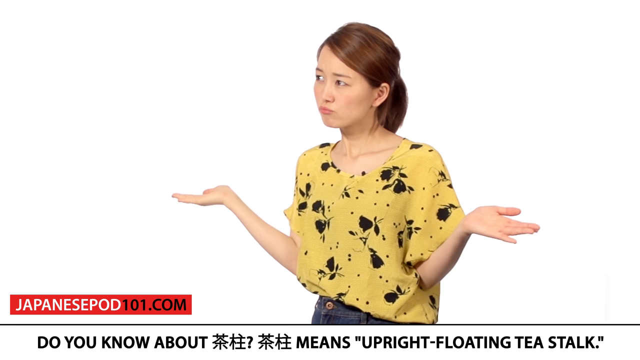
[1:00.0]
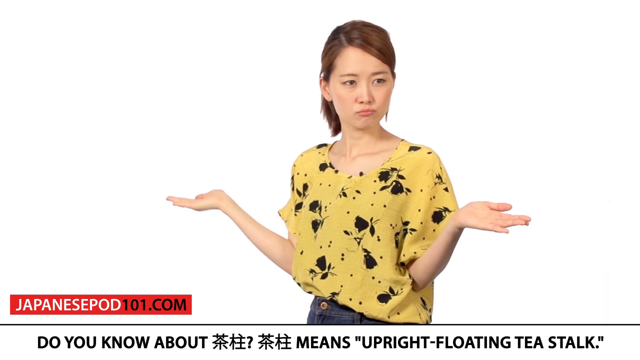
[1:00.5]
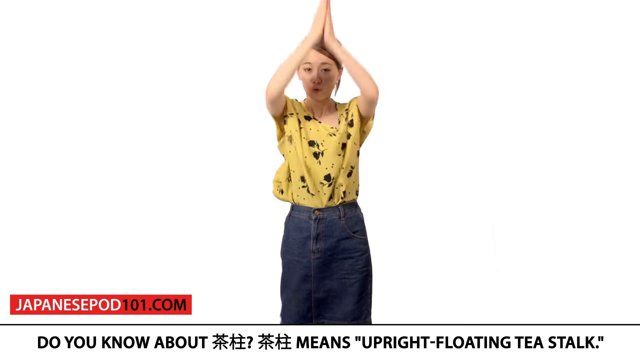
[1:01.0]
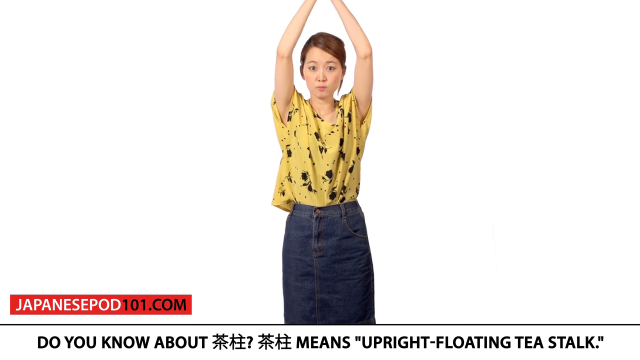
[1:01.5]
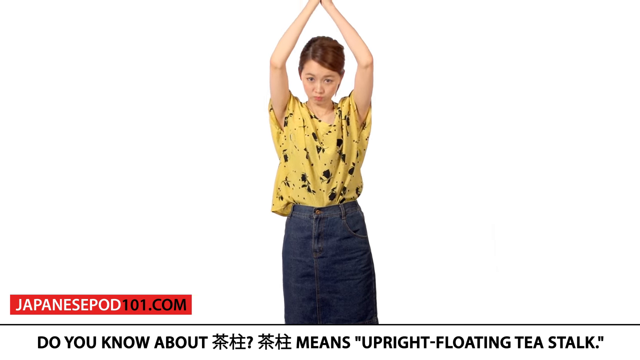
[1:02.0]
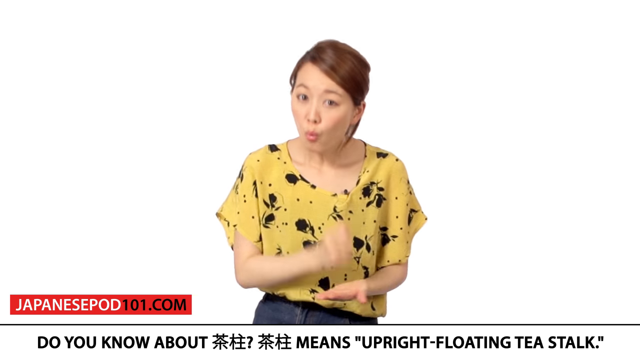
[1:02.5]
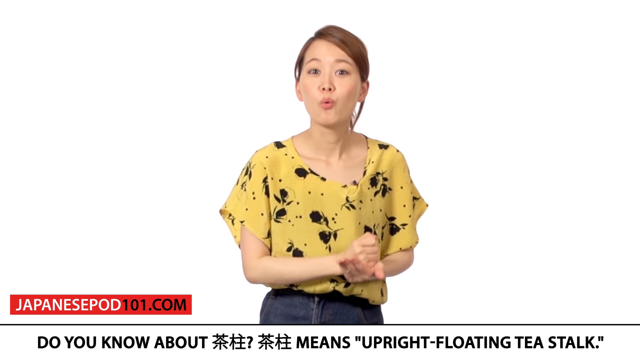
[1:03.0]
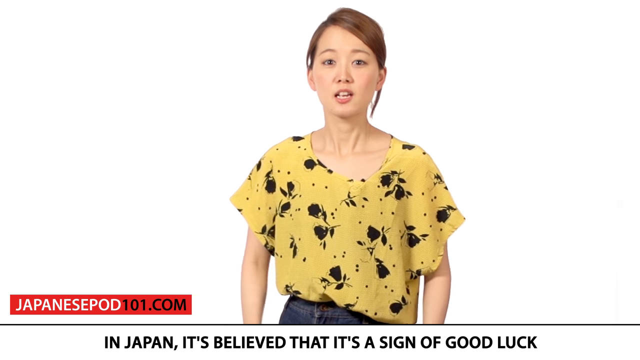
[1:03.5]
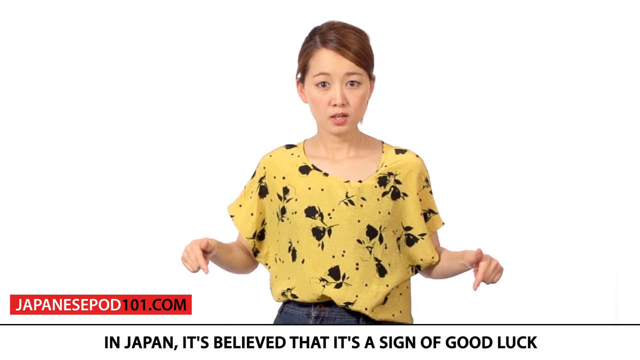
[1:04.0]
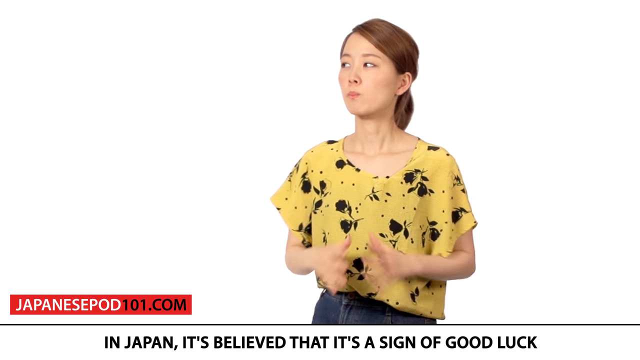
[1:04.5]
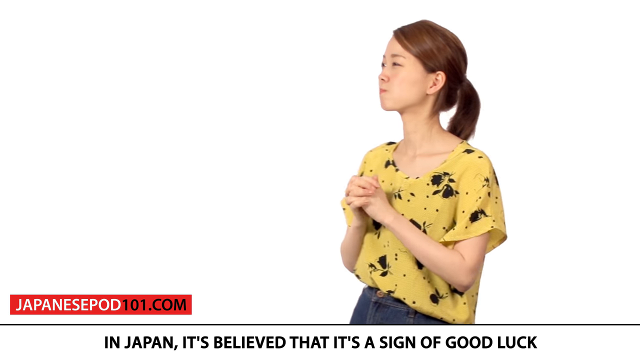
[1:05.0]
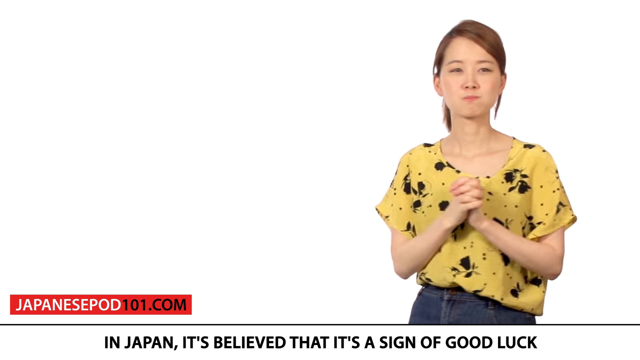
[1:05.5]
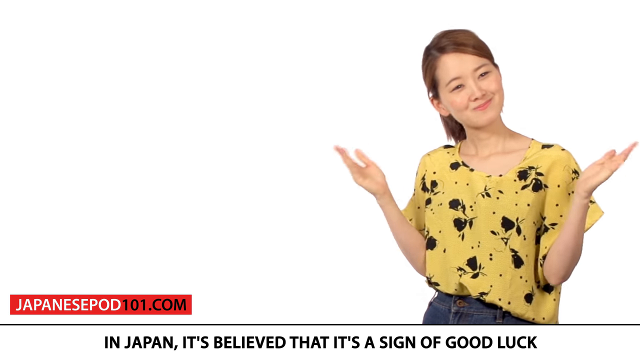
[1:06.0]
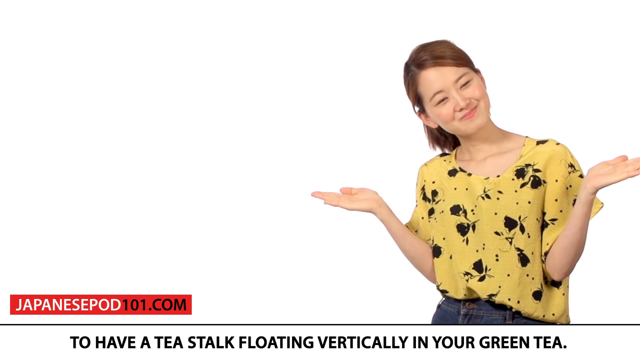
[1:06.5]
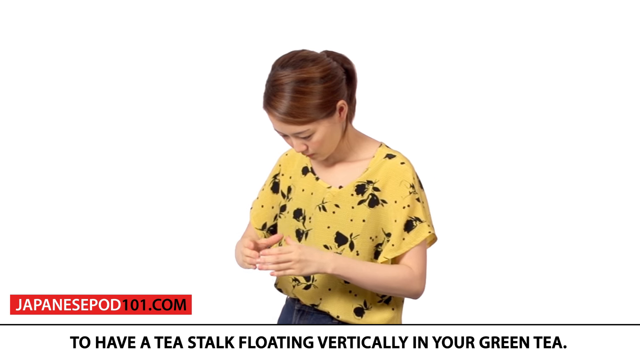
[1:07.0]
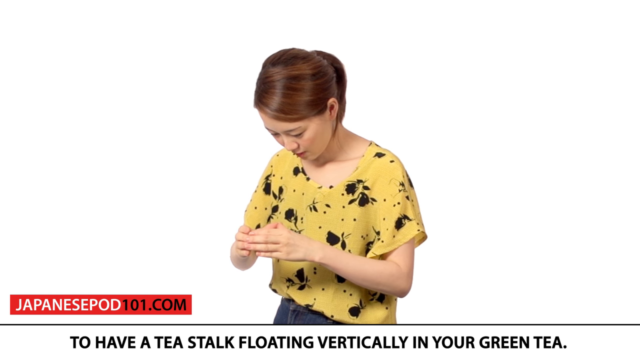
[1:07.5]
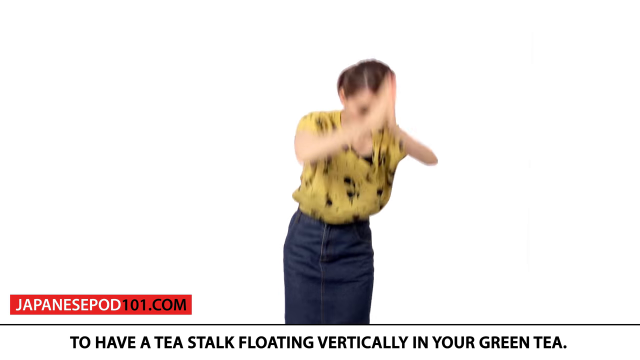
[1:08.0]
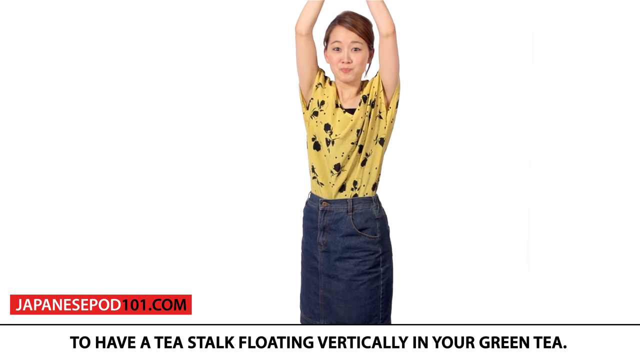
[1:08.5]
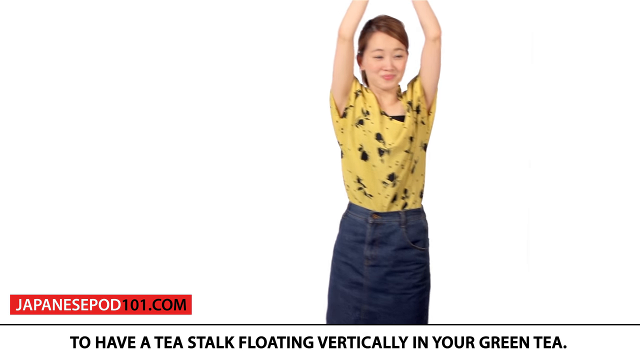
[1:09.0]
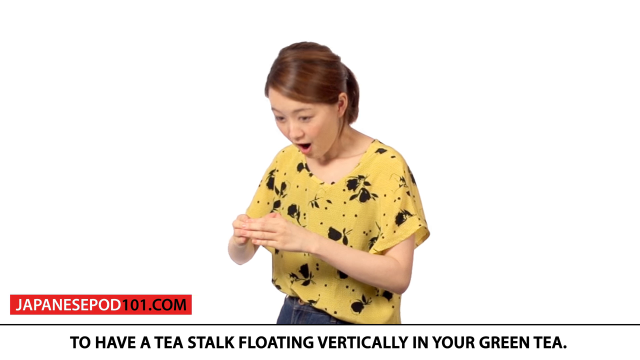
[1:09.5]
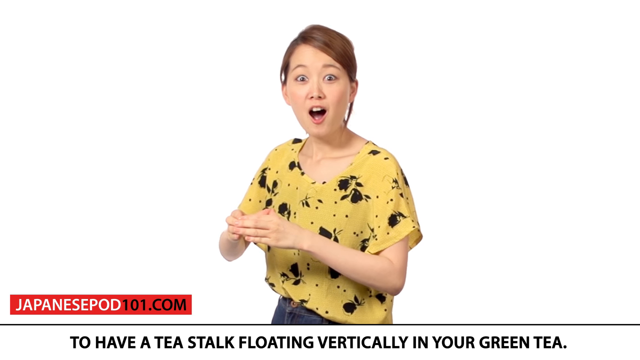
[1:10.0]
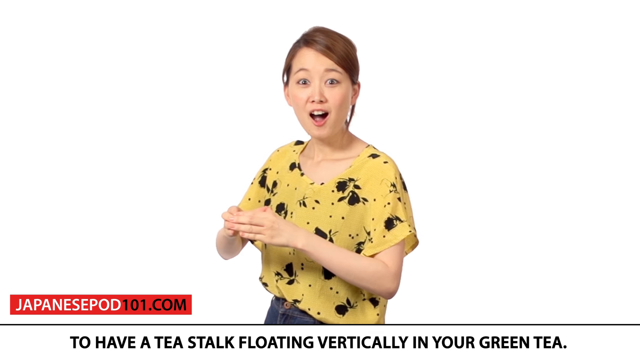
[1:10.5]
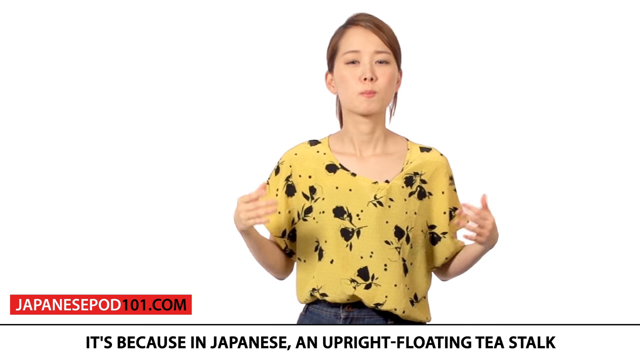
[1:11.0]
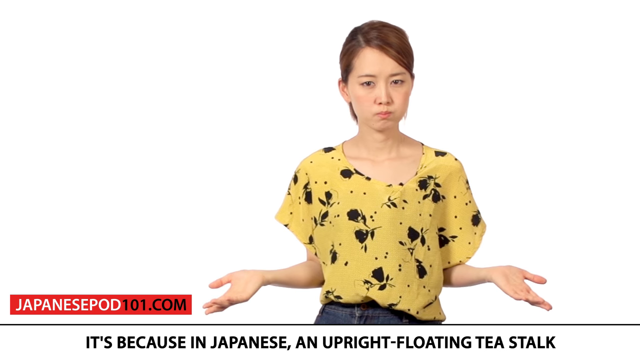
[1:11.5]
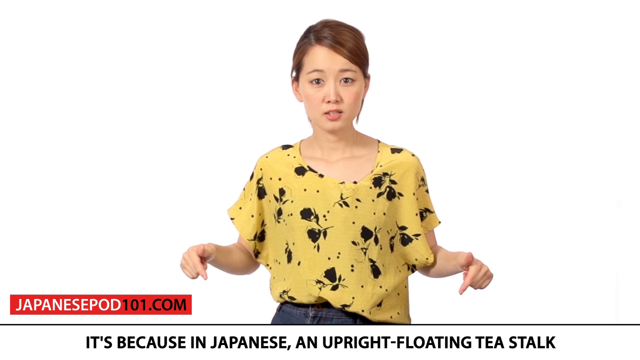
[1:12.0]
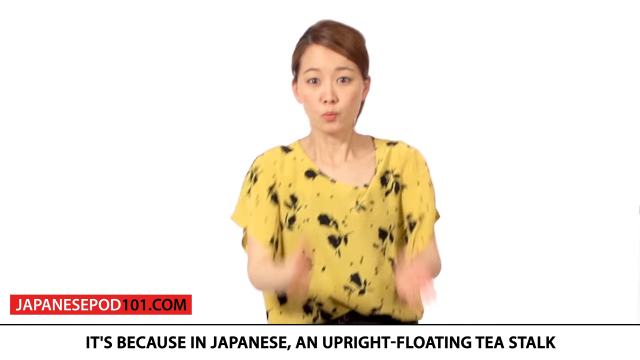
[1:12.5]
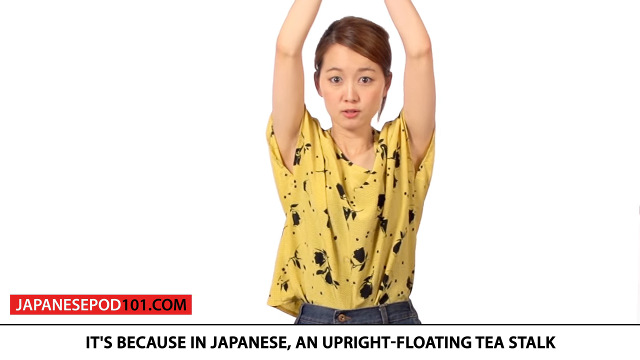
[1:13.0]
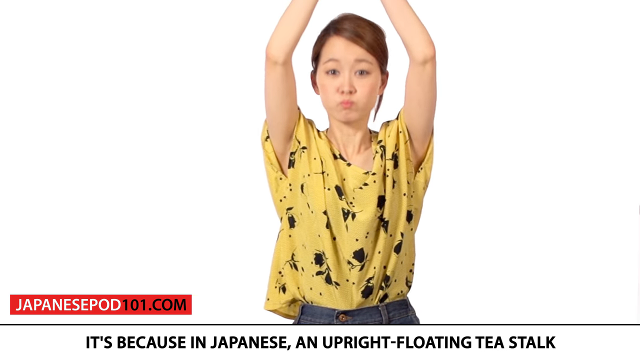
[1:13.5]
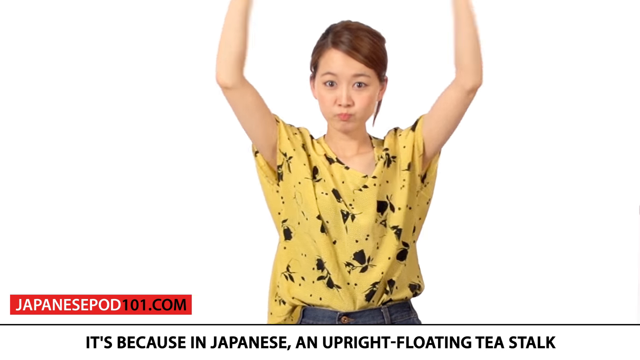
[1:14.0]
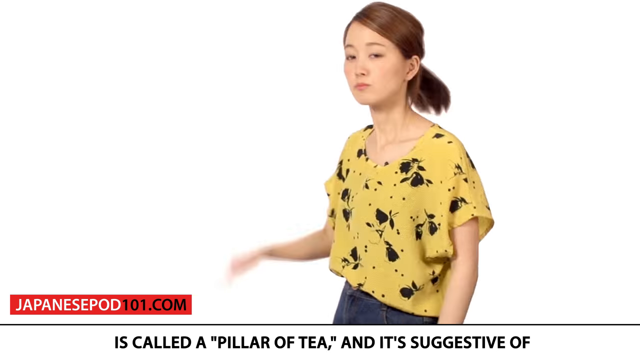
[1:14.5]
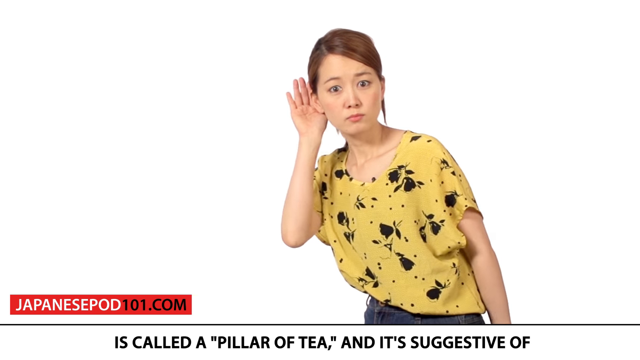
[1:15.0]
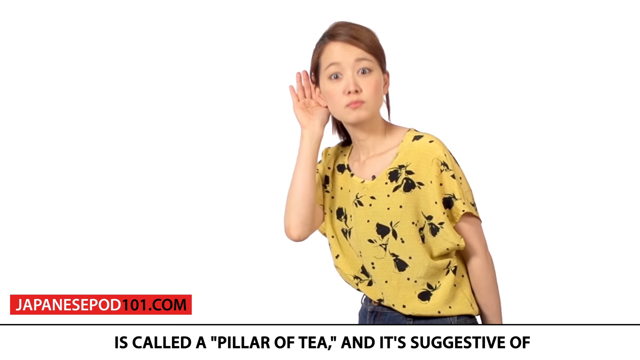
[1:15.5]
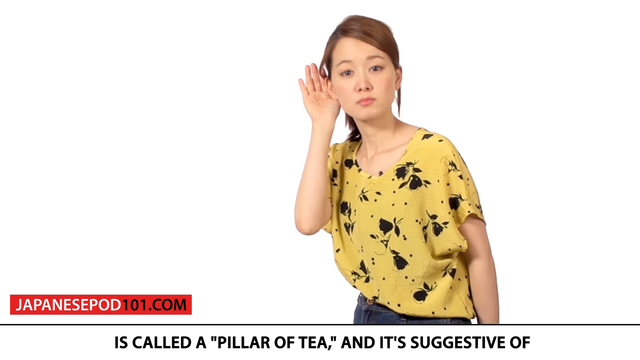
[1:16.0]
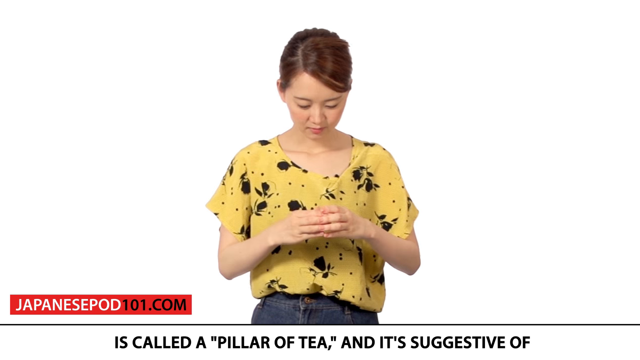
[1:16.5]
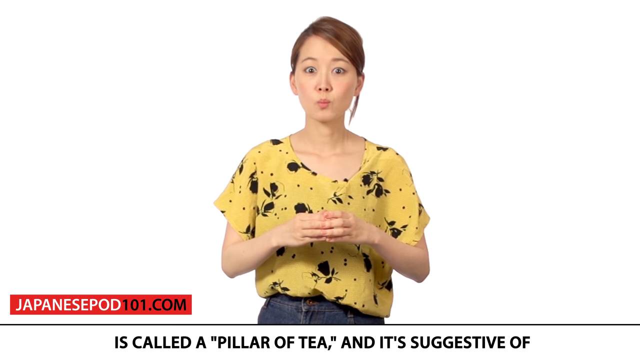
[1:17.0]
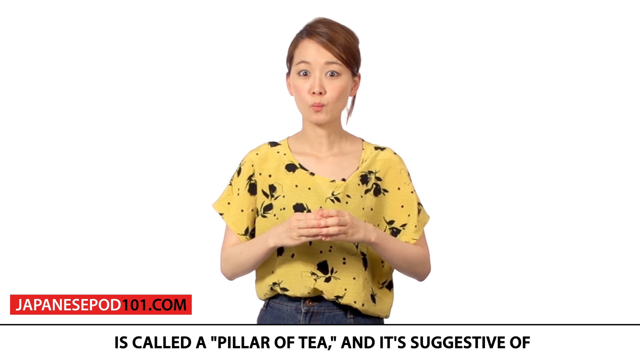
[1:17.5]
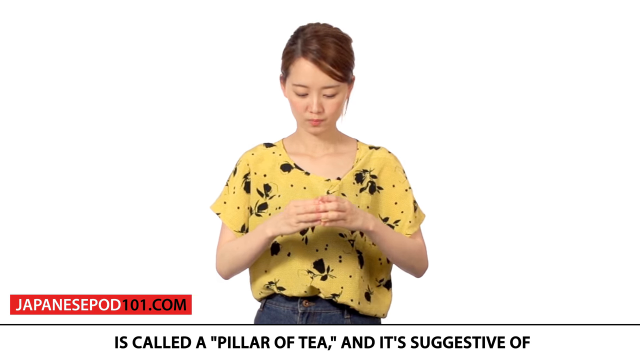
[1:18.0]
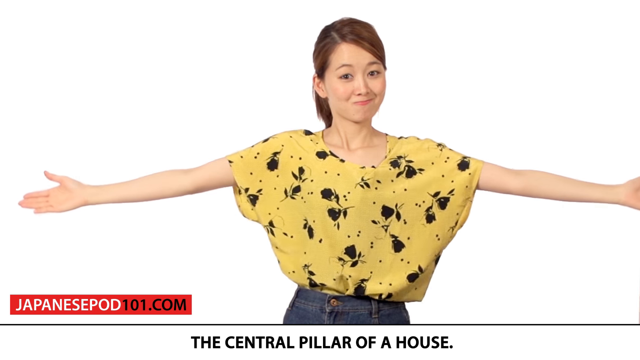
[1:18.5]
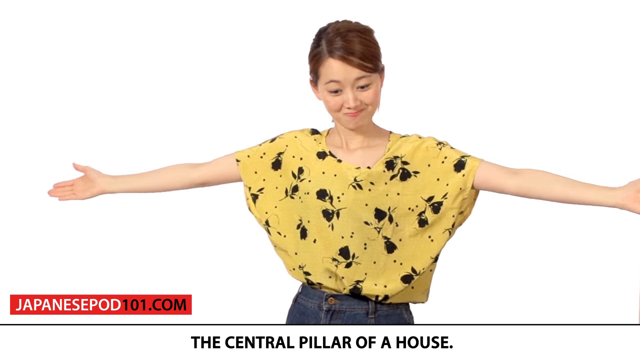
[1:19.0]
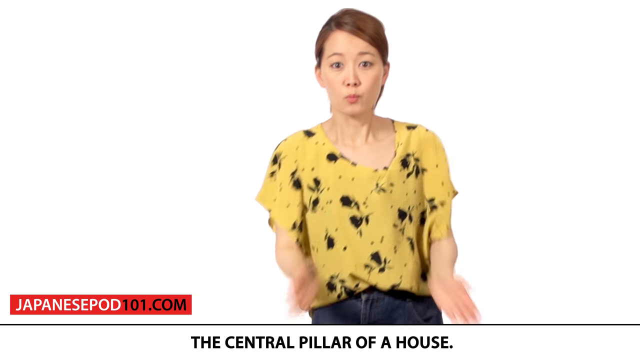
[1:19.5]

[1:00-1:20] The woman is on the white background, wearing a yellow t-shirt with flowers and blue jeans; she has brown eyes and brown hair. Text below her reads "In Japan, it's believed that it's a sign of good luck to have a tea stalk floating vertically in your green tea", and further text says it "is suggestive of the central pillar of a house". The woman makes various movements, apparently holding a tea, making swimming-like motions, and gesticulating to the viewers.